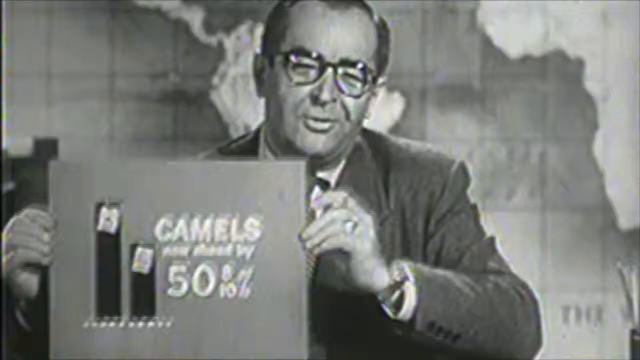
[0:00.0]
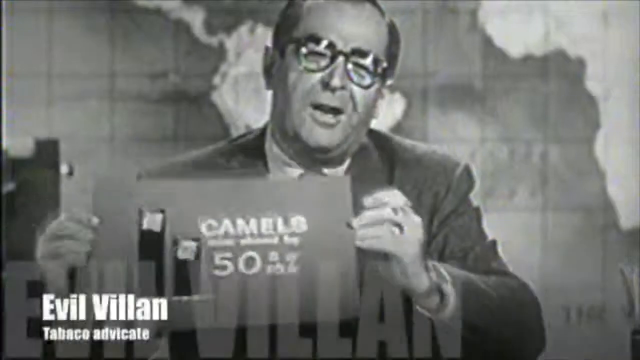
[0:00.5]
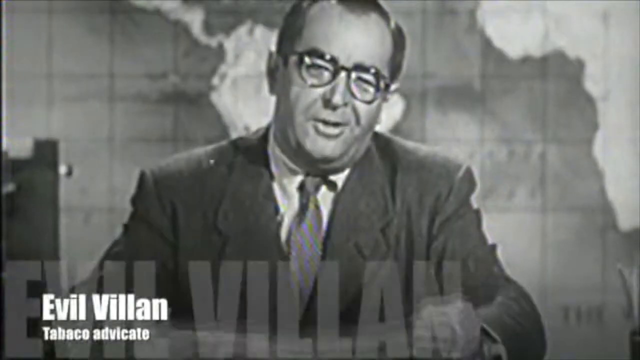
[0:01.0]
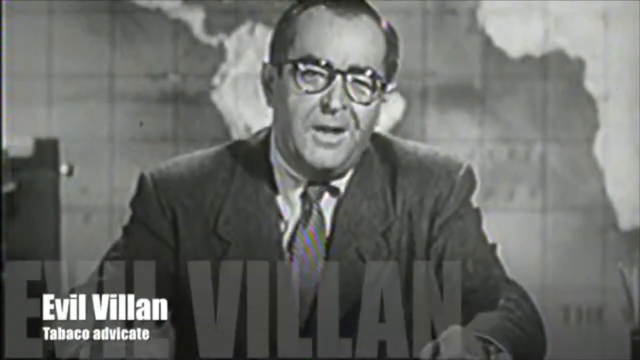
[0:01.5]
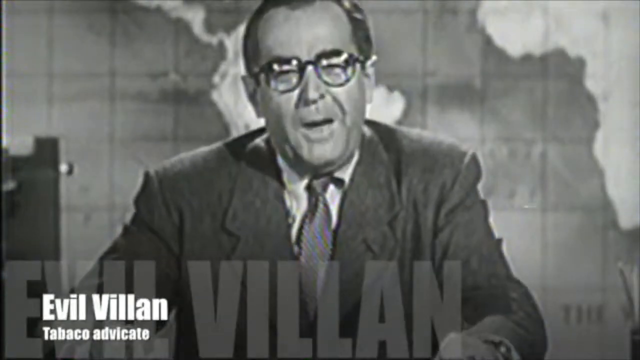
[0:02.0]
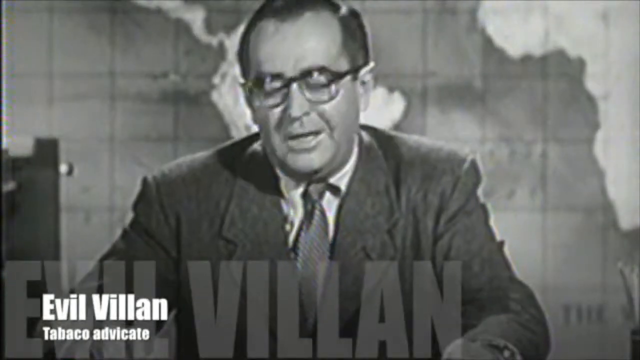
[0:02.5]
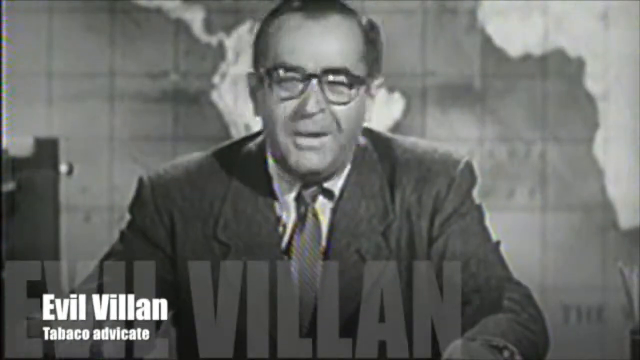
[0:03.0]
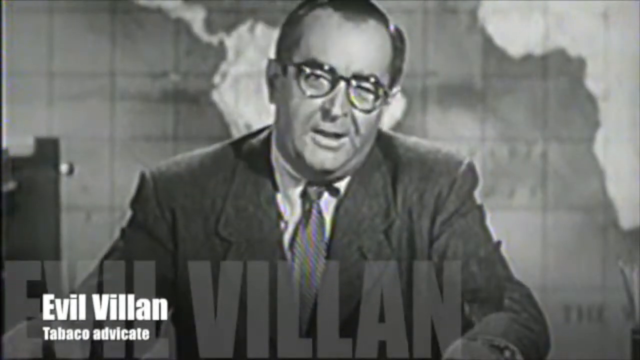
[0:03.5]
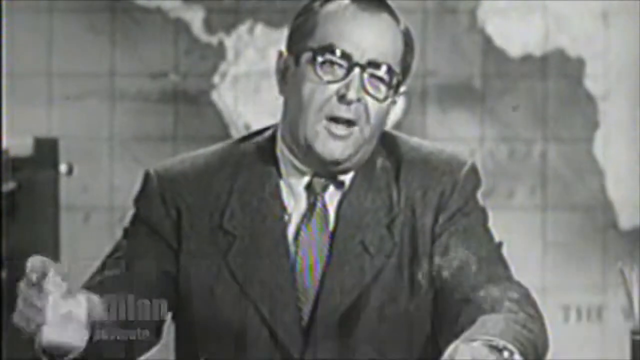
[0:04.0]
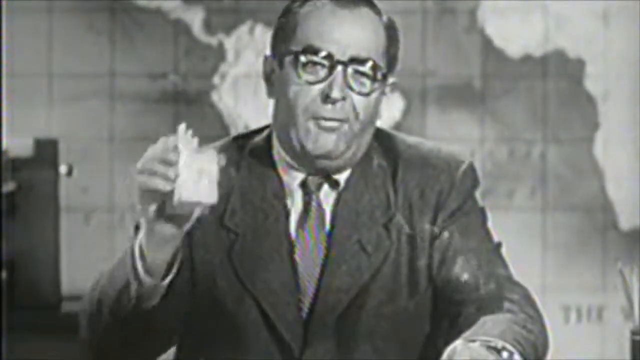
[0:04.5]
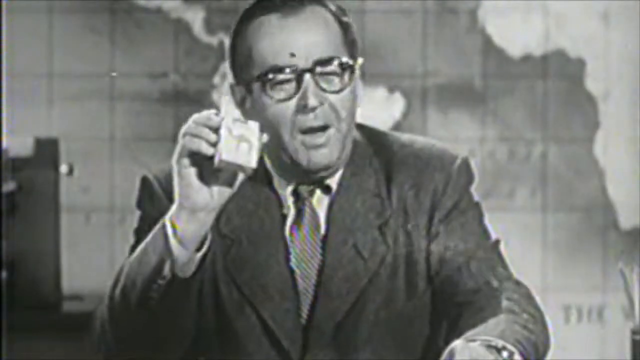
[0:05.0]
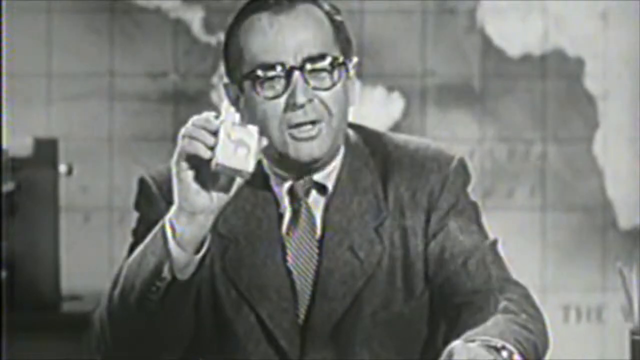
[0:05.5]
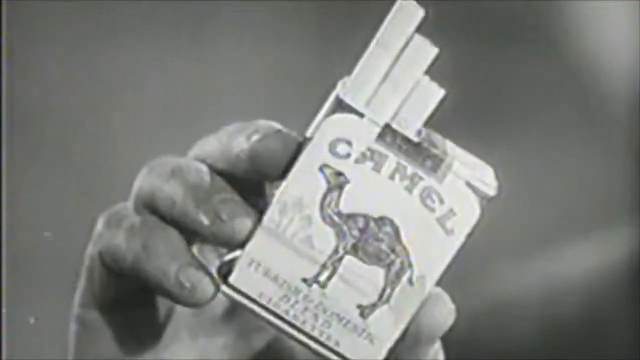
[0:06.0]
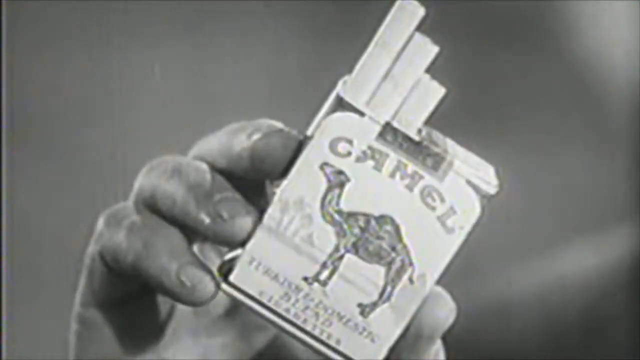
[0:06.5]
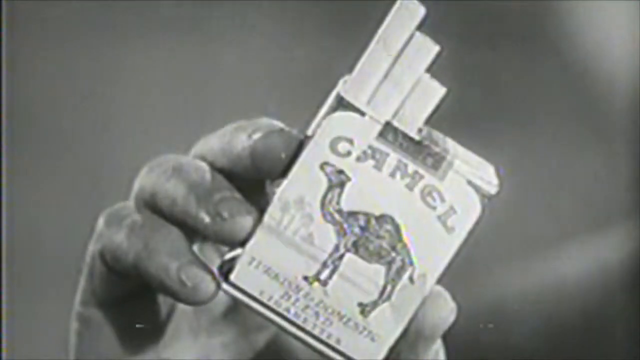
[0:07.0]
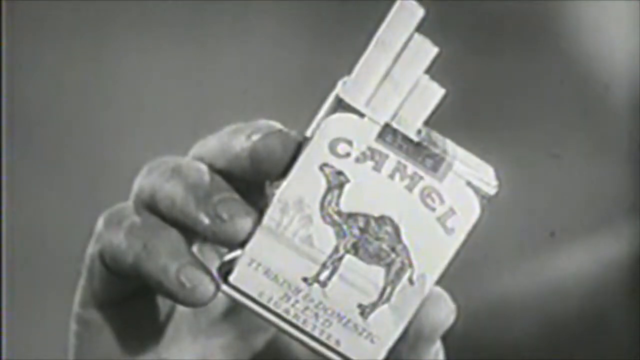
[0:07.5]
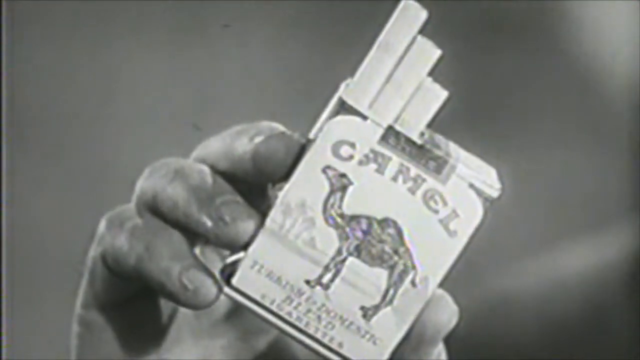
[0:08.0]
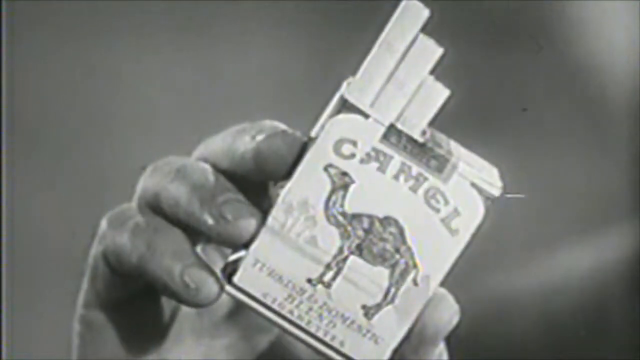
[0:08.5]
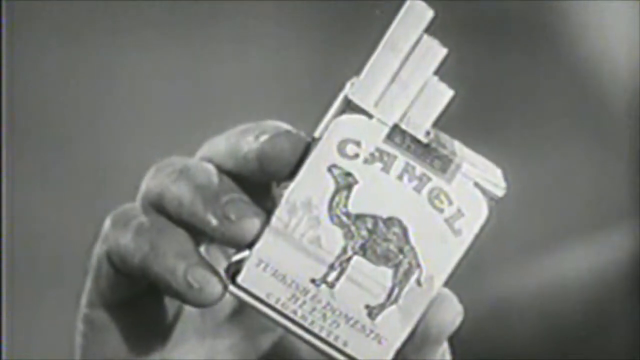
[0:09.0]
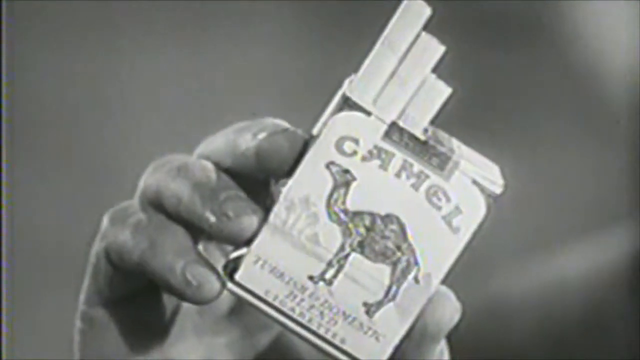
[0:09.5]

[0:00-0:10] A black and white television commercial from the 1950s shows a middle-aged white man with dark black glasses sitting at a desk, with a black and white world map behind him. He holds up a placard that says "camels 50 percent," with pictures of Camel tobacco on it. He then holds up a pack of Camel cigarettes in his right hand, with the cigarettes sticking up in the air, and smokes one. A close-up shows the pack of Camel cigarettes with three cigarettes sticking up through the top and "turkish blend" on the bottom. The shot then goes back to the world map in the background.